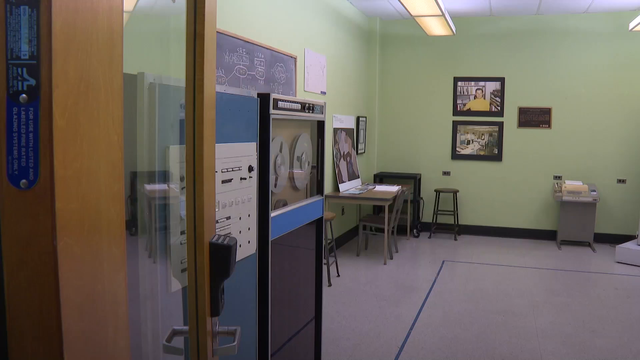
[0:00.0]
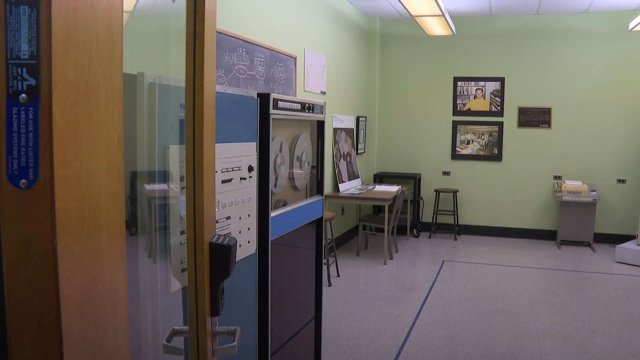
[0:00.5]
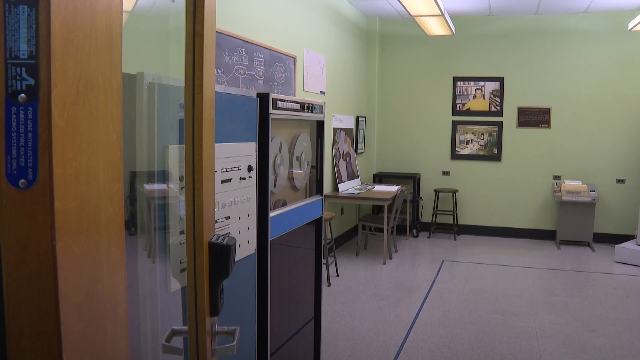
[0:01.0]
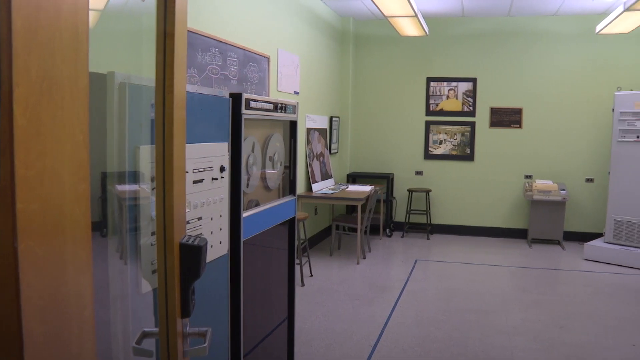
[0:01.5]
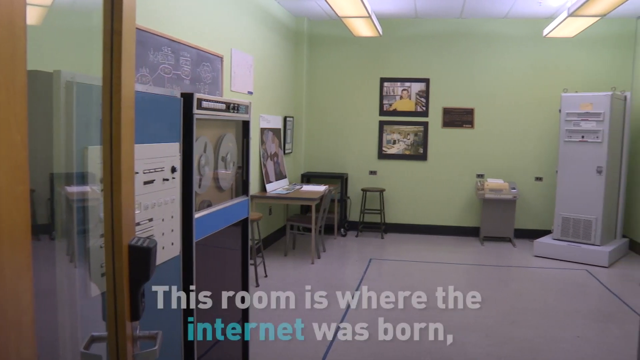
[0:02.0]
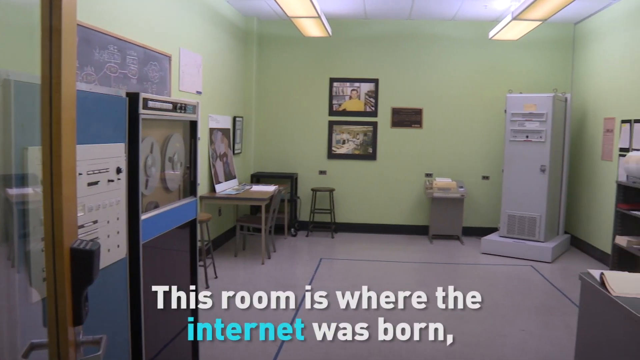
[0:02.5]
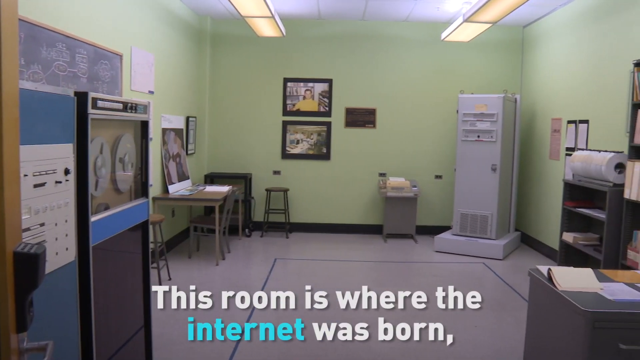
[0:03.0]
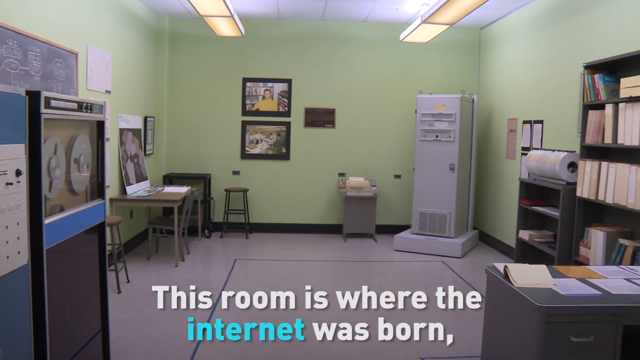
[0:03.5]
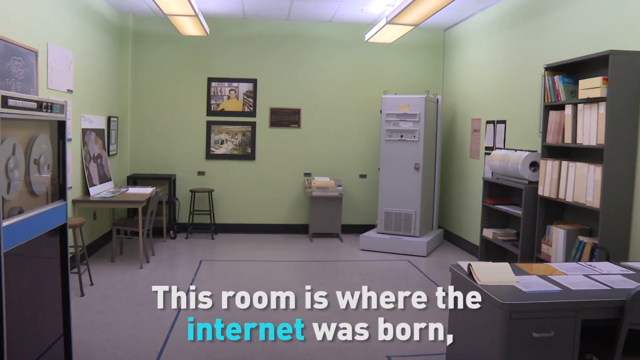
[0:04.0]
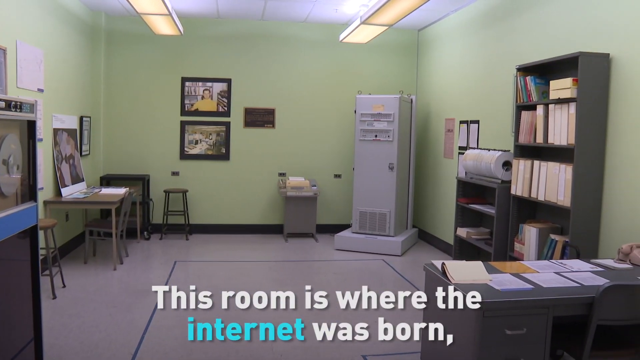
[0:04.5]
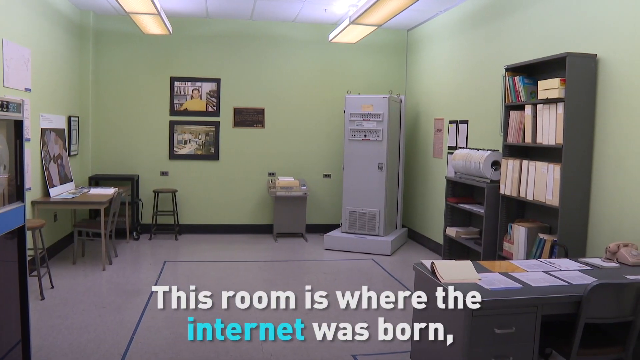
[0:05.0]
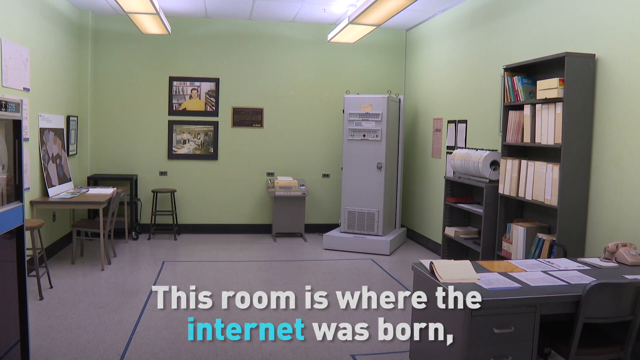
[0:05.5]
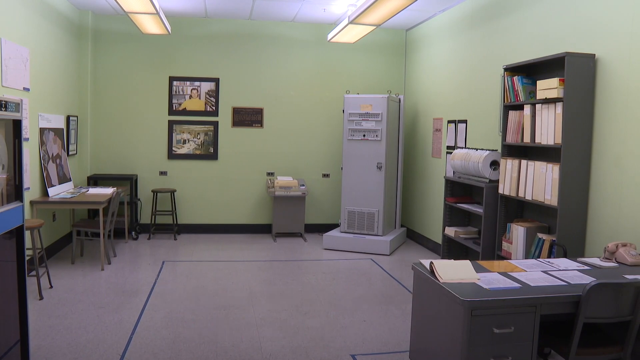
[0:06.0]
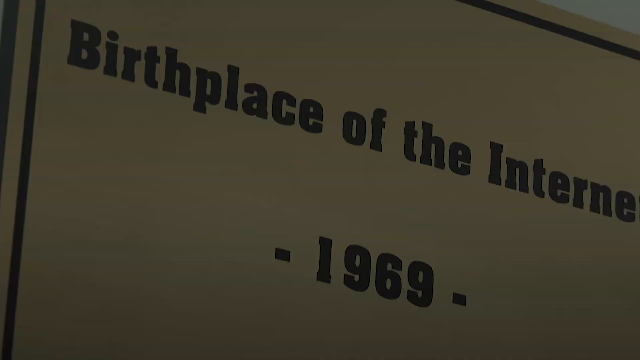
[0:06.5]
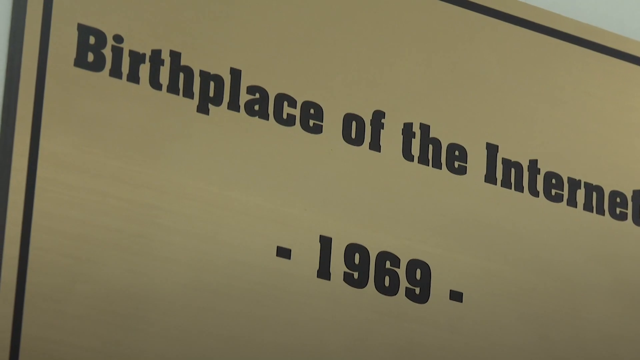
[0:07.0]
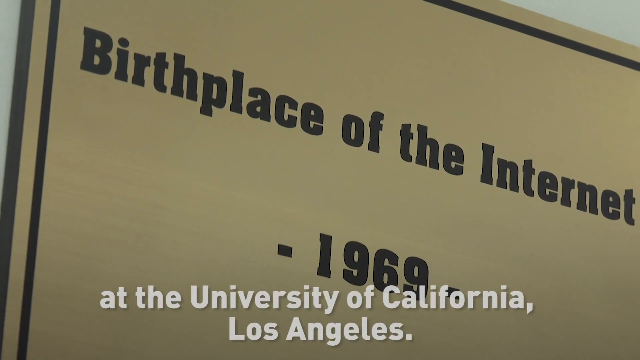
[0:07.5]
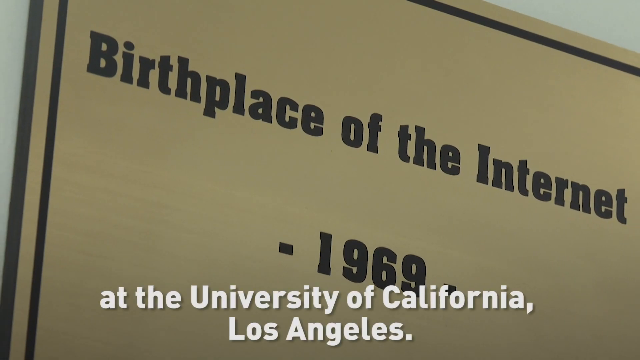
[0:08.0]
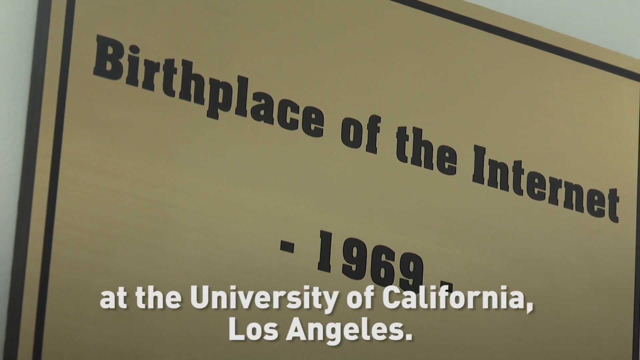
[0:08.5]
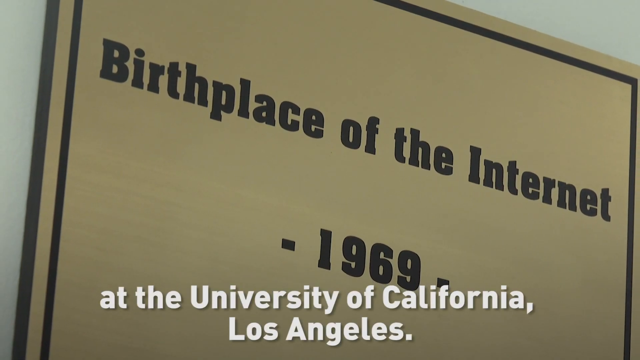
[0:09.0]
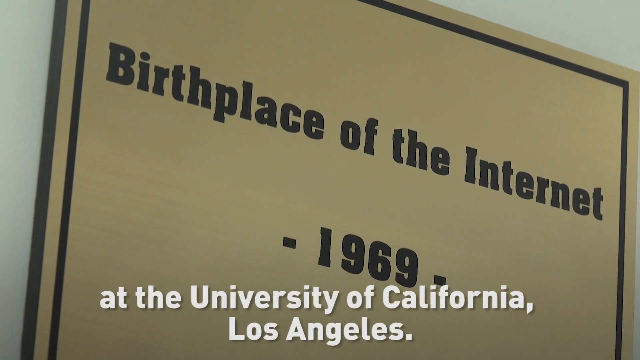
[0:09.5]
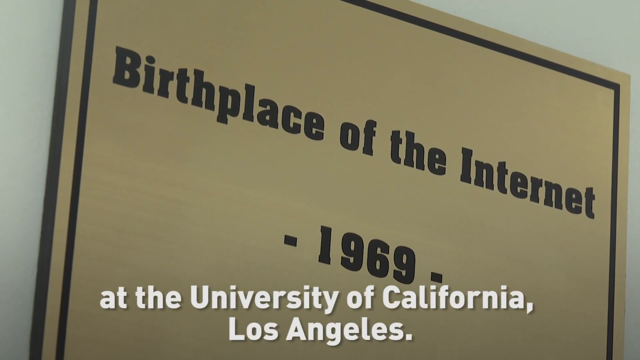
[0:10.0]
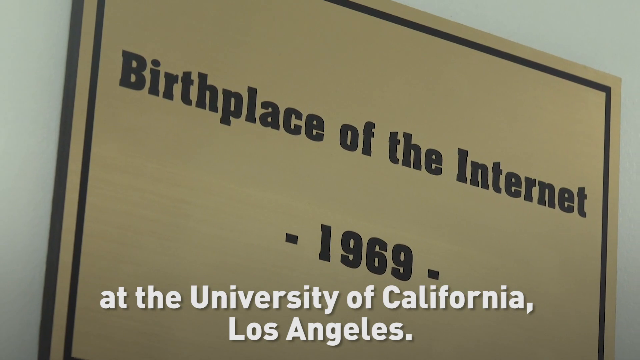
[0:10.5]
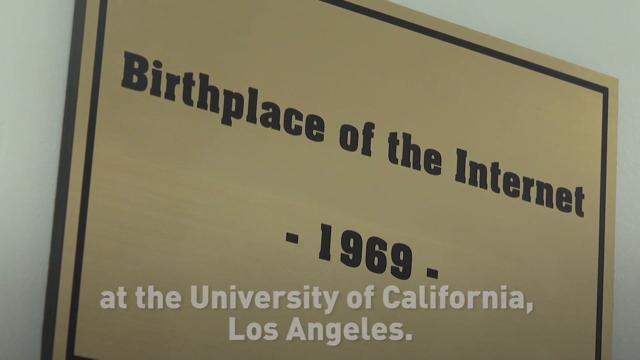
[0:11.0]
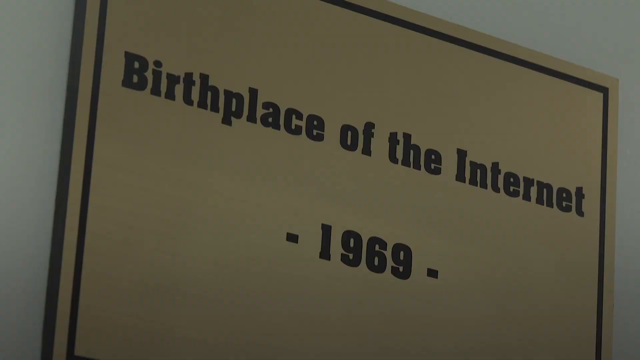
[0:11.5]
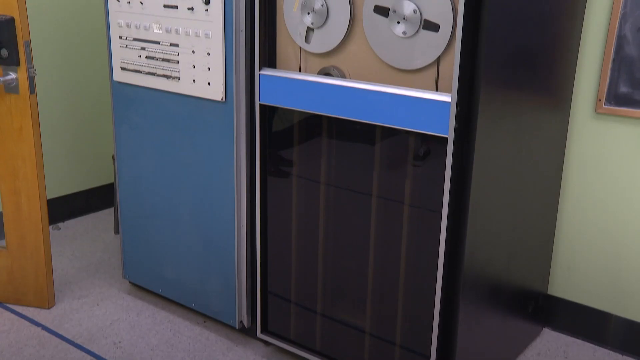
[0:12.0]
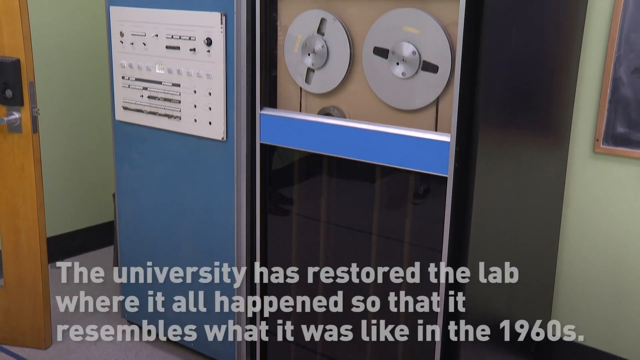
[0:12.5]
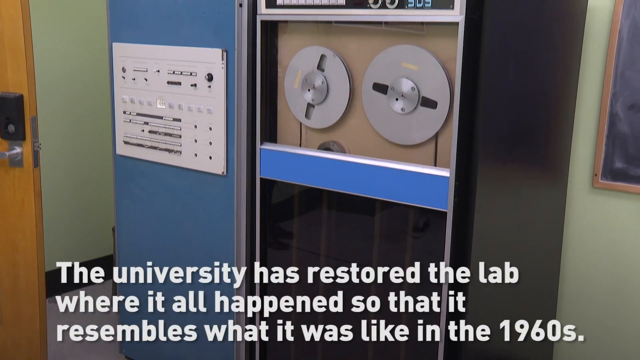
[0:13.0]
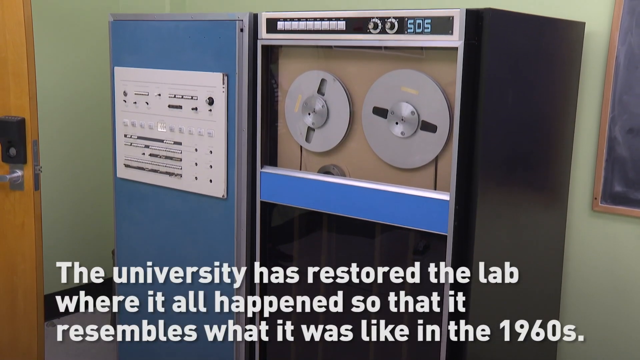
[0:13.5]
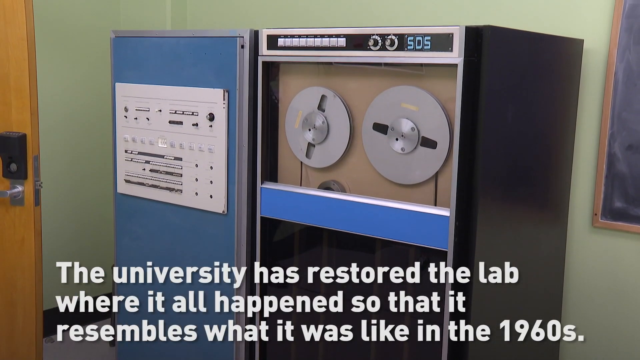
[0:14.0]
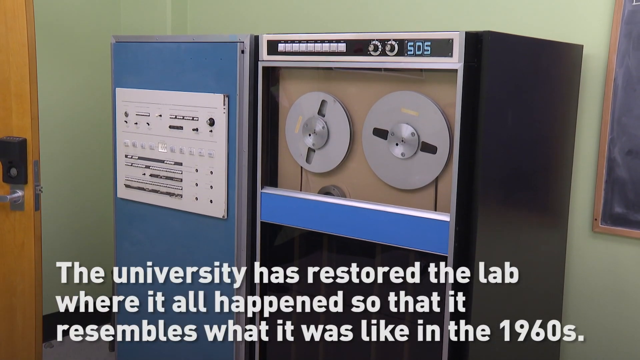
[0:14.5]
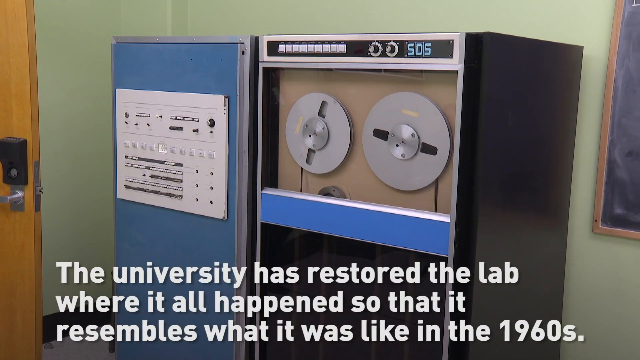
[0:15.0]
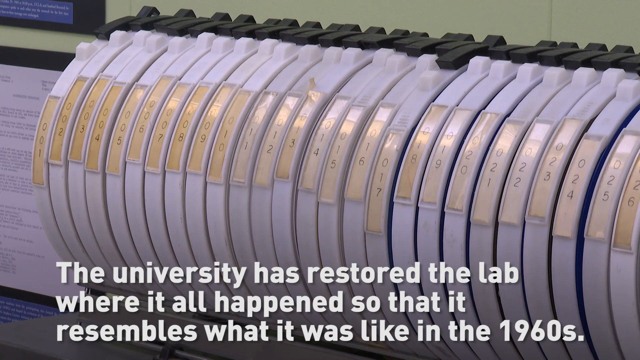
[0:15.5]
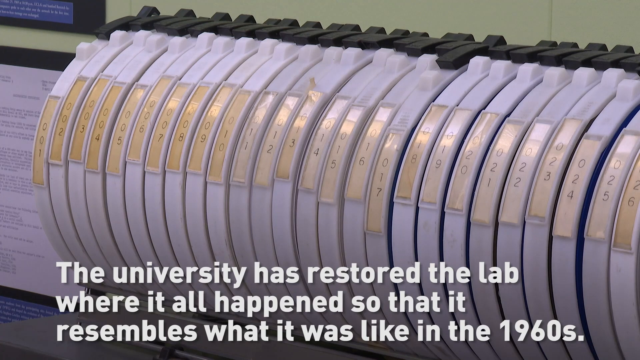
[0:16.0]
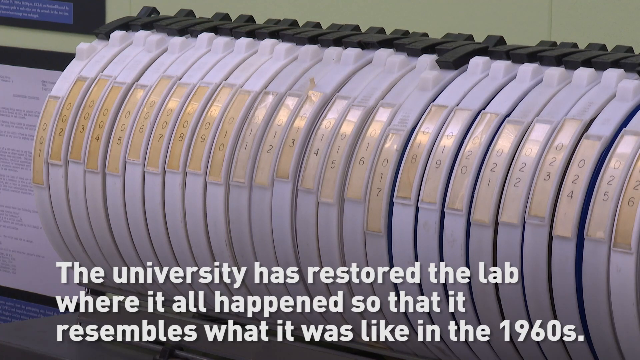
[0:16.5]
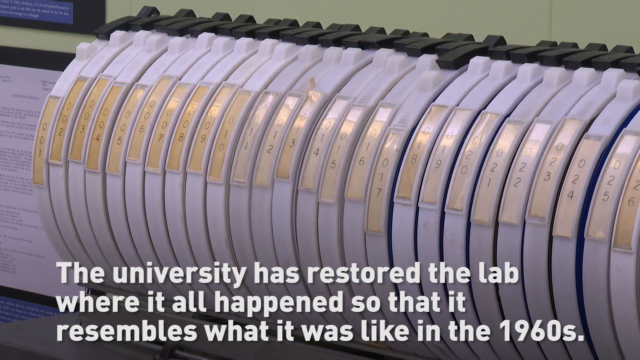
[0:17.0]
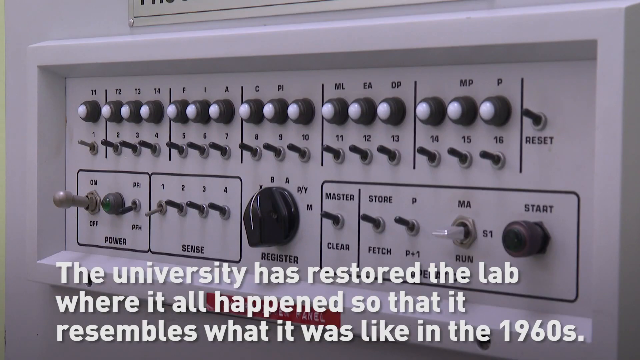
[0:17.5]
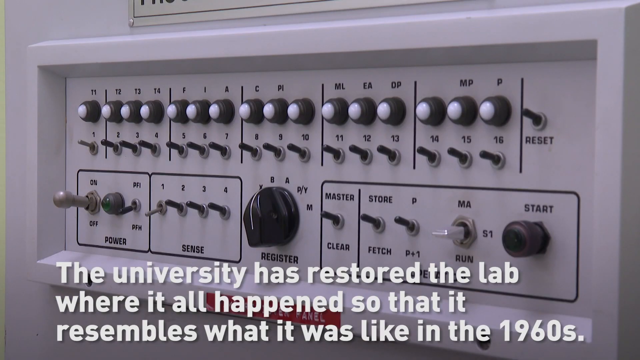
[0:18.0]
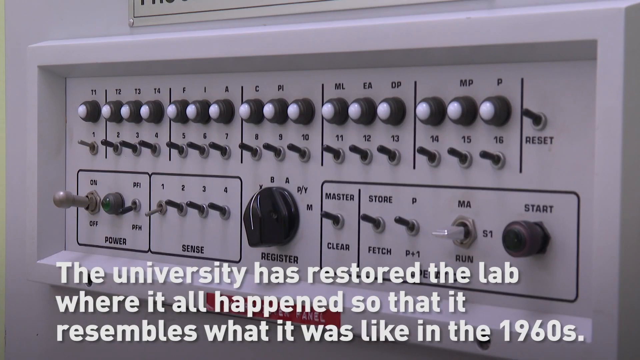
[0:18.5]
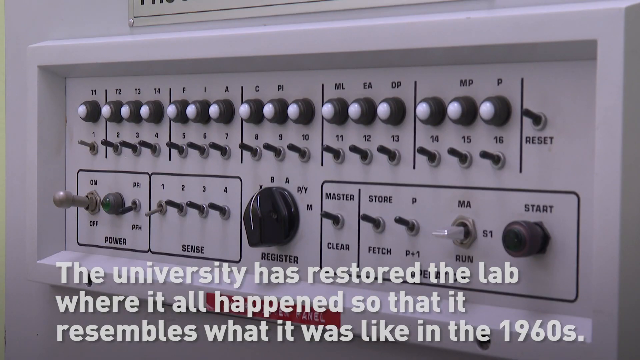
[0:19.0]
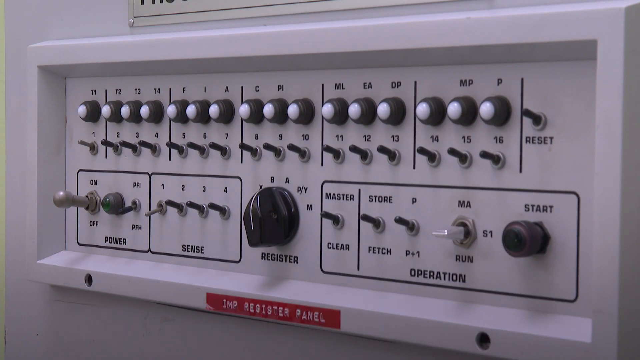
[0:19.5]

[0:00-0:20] The camera looks through a door into a room with light green walls, with computer equipment from the 1960s arranged around the room. On the left side of the room are two large computers, one of which has dials in it, the kind that film or tape would be wound around. There is a small desk in the back left corner and another large white tower machine in the right corner. On the right wall there is a bookcase with a roll of paper, and another taller bookcase next to it. Captions run across the bottom of the screen; the first reads, "This room is where the internet was born." The scene shifts to a closeup of a sign that says "Birthplace of the Internet, 1969," and the caption changes to "at the University of California, Los Angeles." The camera then switches to a closeup of the two large computers: the one on the left has a white panel with little switches on it, and the one on the right has the two dials with tape on it. The caption reads, "The university has restored the lab where it all happened, so that it resembles what it was like in the 1960s." Next comes a closeup of a row of reels that look like film reels, then a closeup of the white panel on one of the machines, showing a row of buttons on top, a row of switches below it, a knob in the center, and some additional switches on either side.